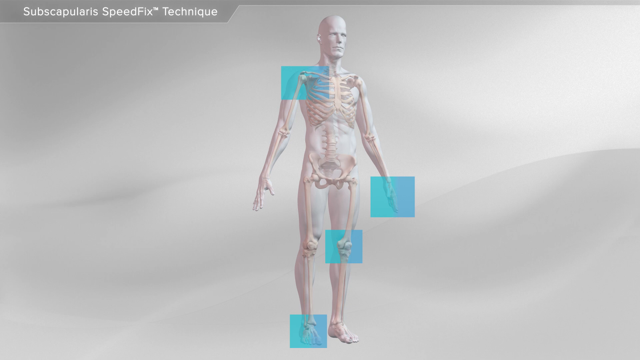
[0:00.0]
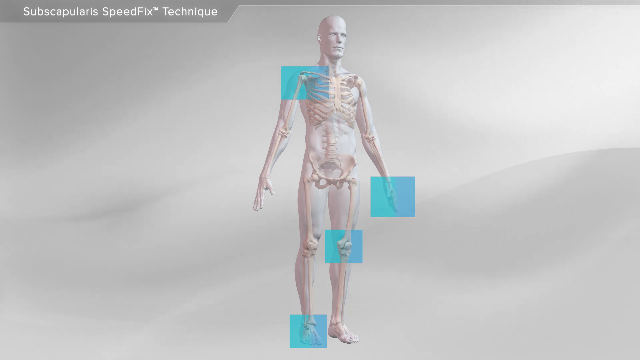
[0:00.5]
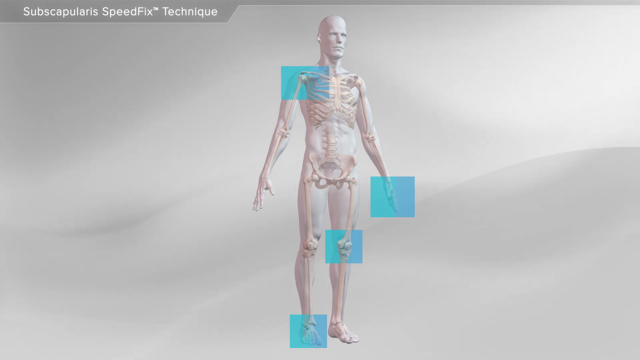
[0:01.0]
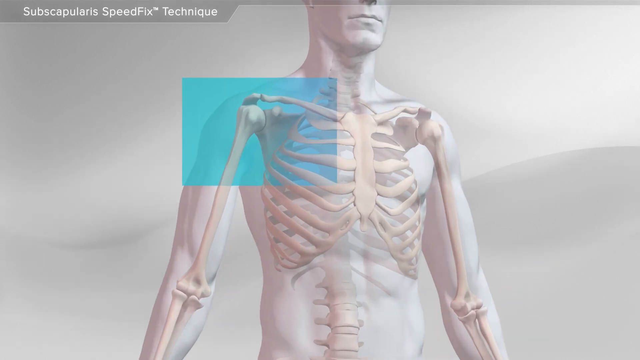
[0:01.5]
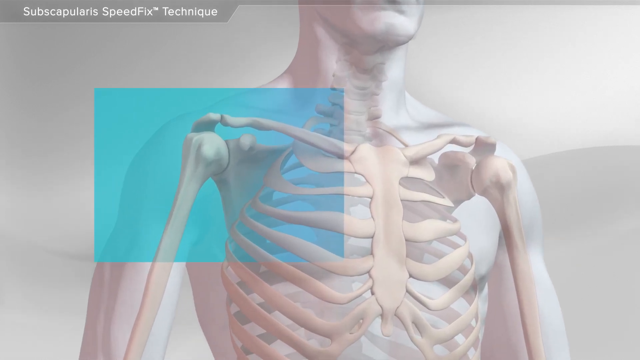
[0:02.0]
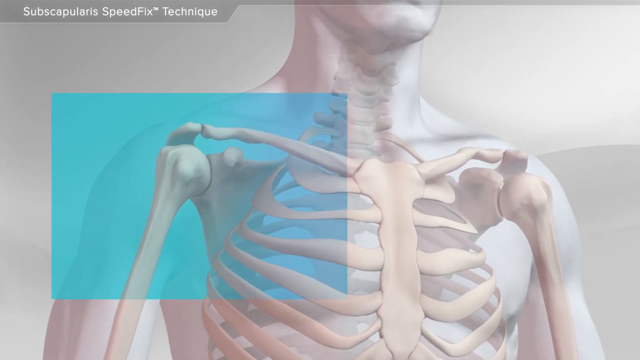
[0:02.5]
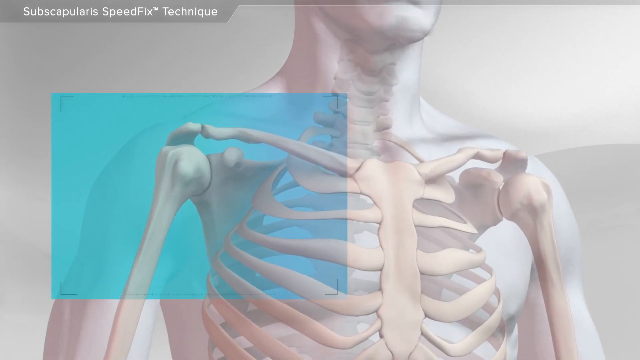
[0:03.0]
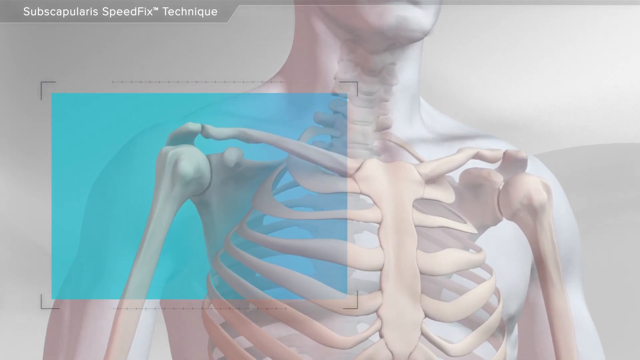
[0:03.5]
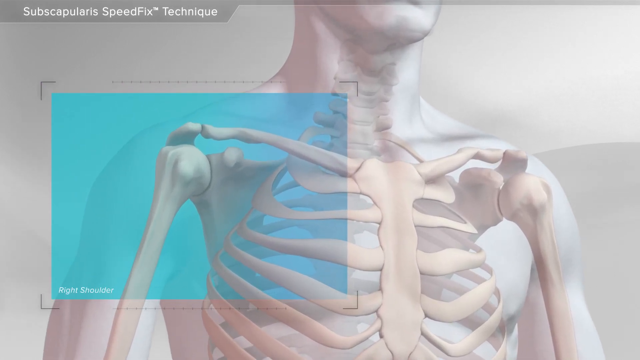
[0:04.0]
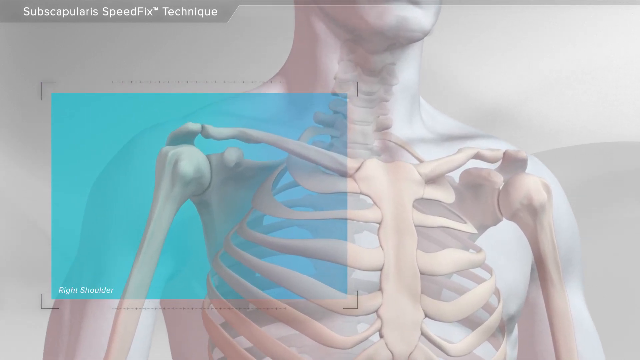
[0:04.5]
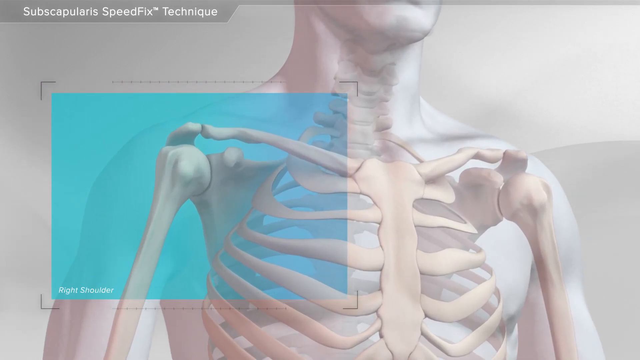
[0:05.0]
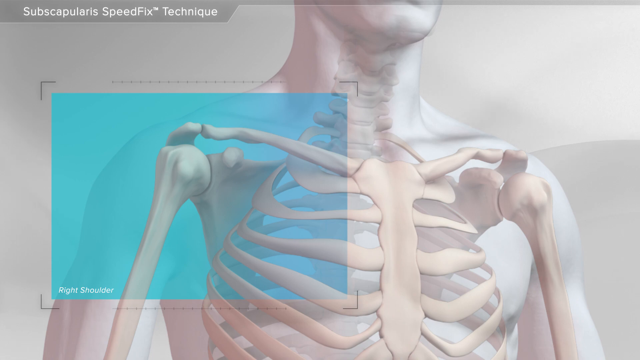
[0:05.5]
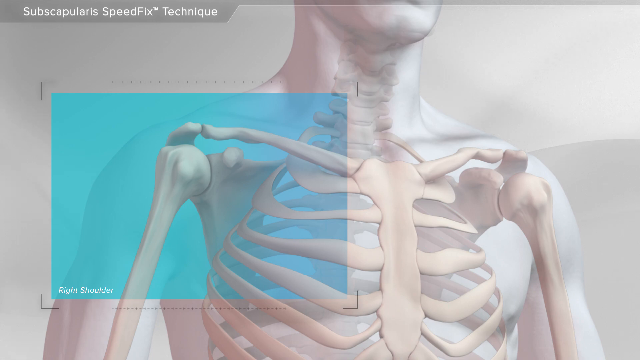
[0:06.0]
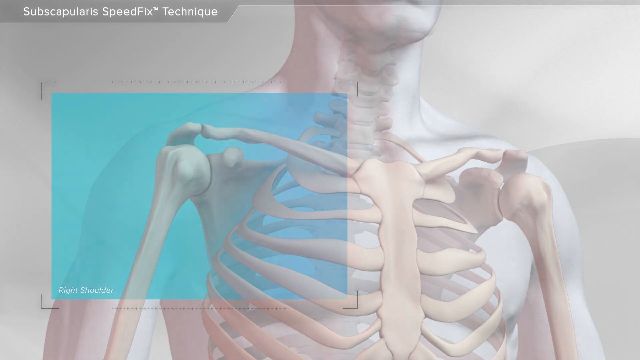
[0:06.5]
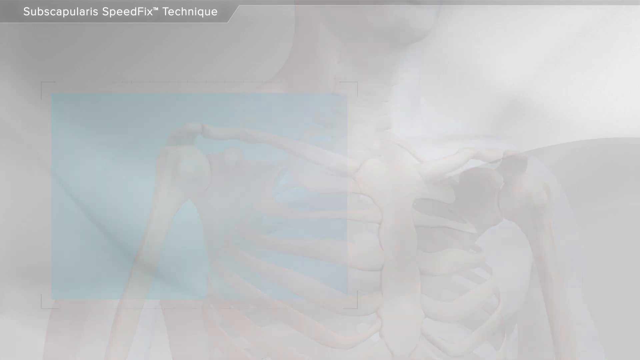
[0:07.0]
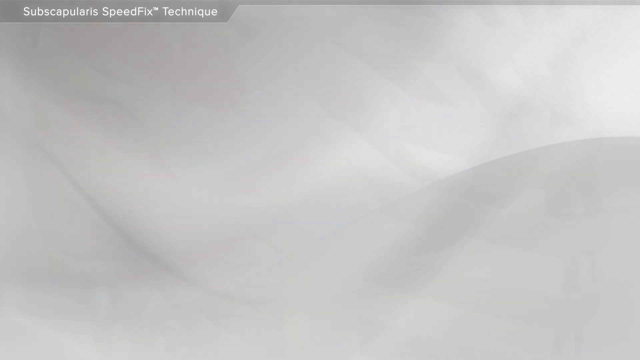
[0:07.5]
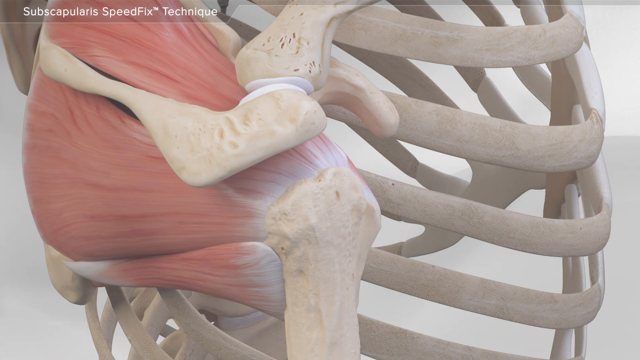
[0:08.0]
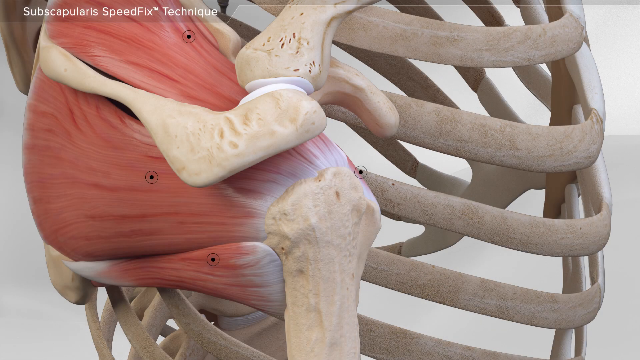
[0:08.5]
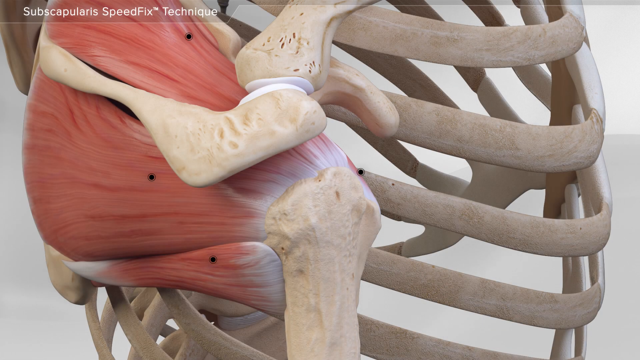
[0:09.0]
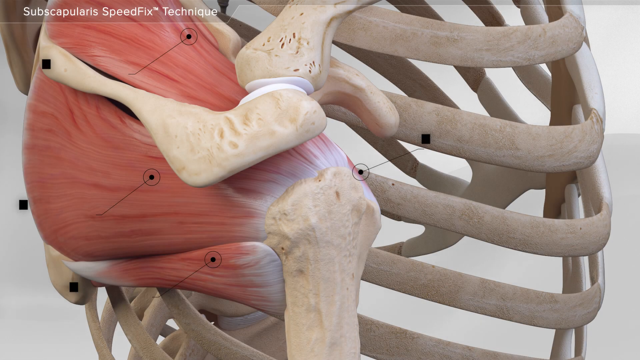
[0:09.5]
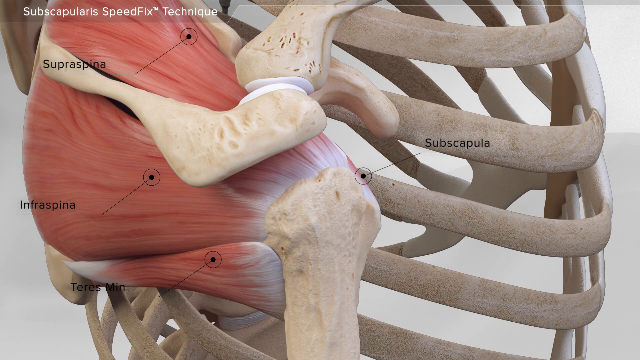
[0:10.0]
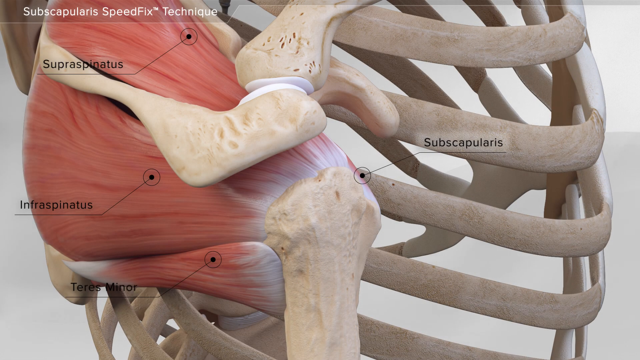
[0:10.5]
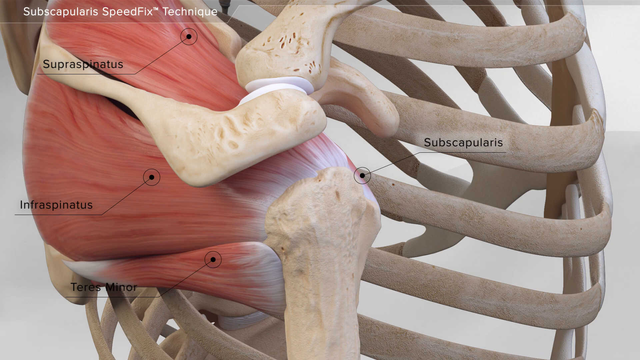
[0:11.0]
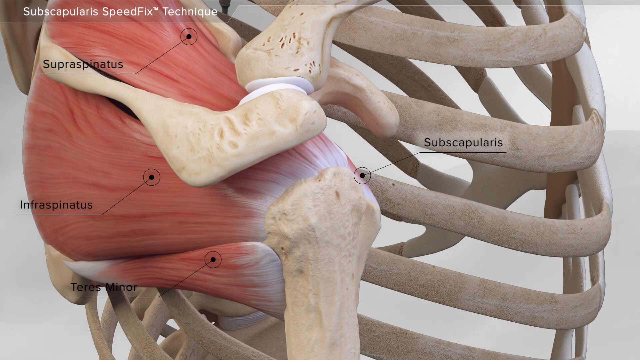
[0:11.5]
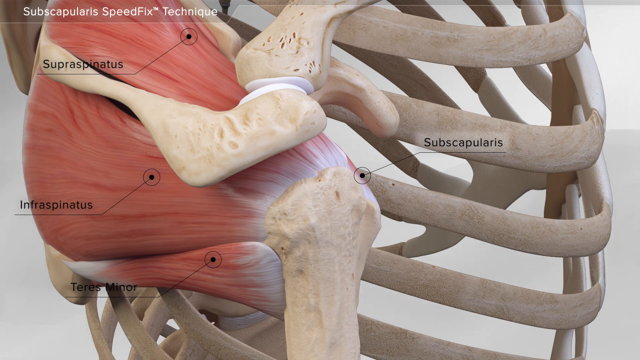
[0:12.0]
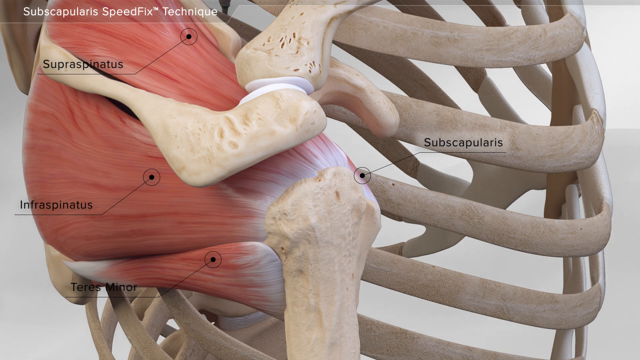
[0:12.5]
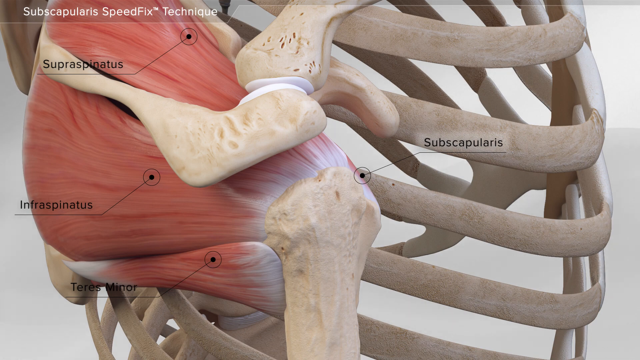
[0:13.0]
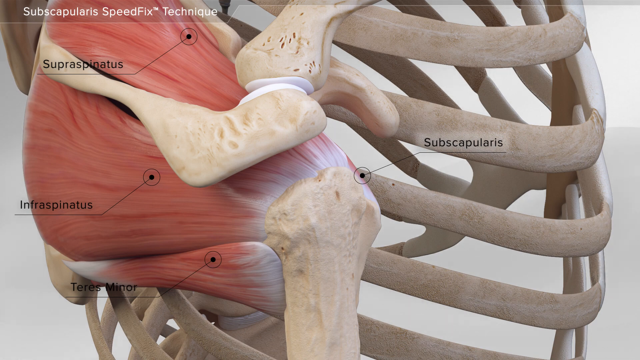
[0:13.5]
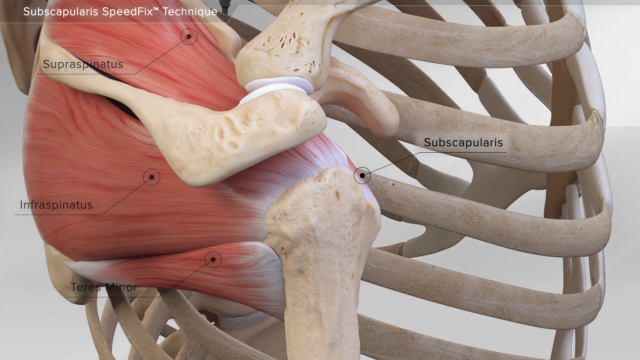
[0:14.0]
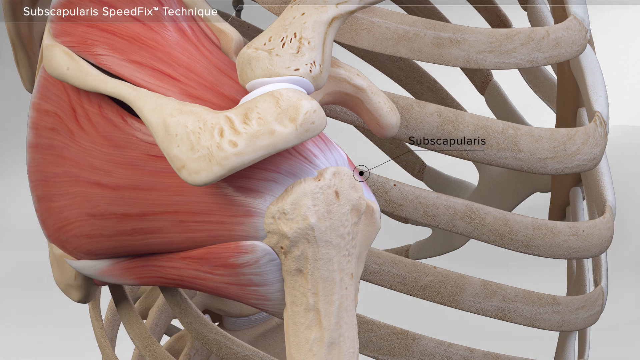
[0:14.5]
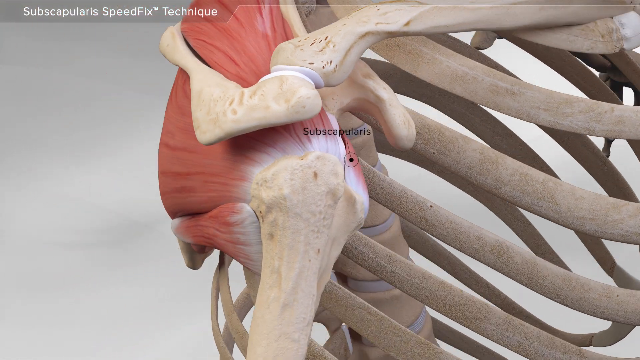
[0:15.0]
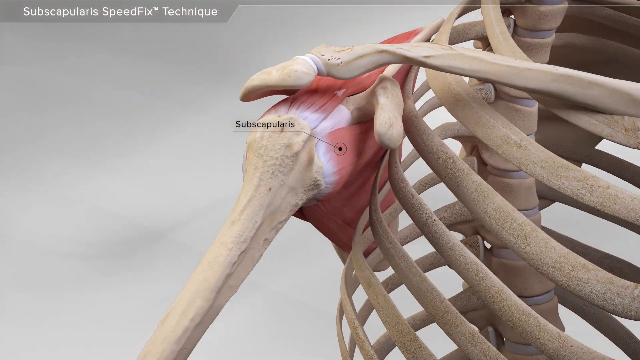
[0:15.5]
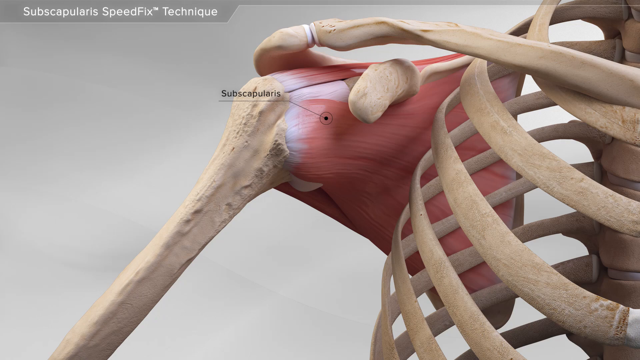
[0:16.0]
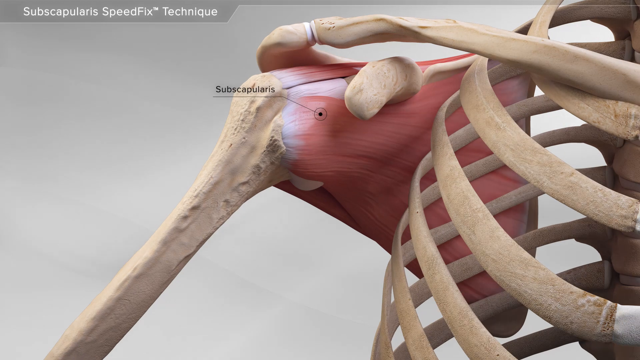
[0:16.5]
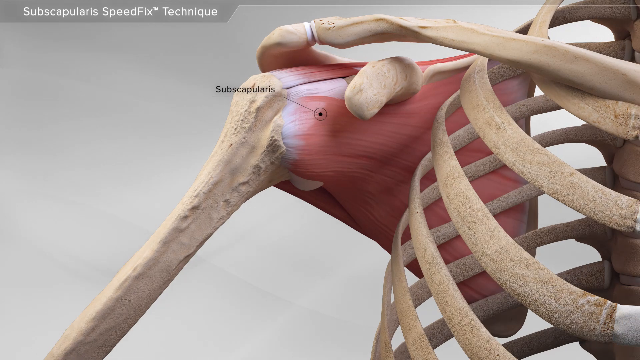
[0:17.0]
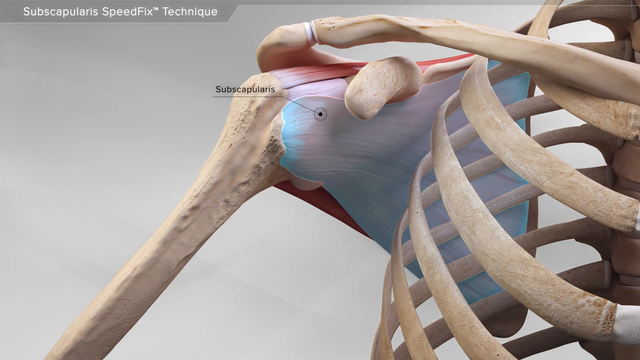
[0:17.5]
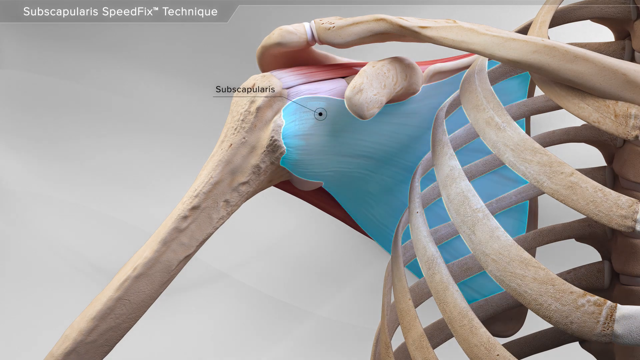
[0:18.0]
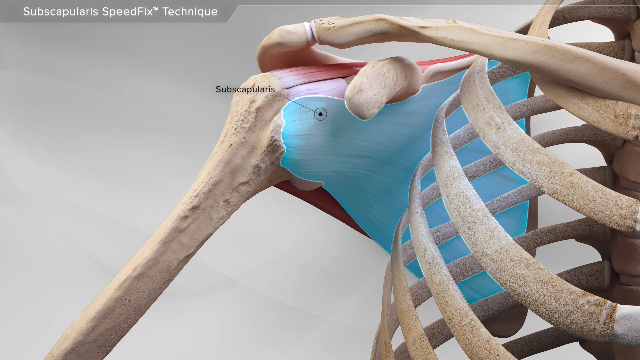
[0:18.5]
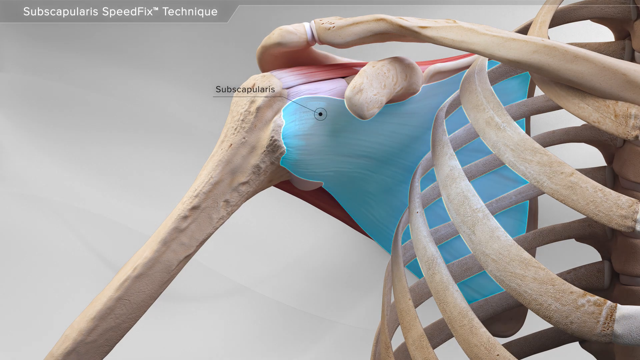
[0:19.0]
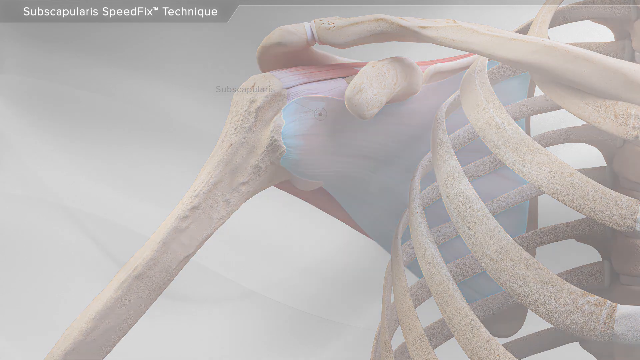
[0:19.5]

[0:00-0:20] Against a gray background, an illustration of a human skeleton, male, faces the camera in the center, with what appears to be an overlay of tissue on top. Translucent blue boxes mark the left shoulder, the right knee and the right hand. In the upper left corner, small white lettering reads "subscapularis speed fix technique". The view then moves to a close-up of the shoulder and scapula, labeled as the right shoulder, followed by an up-close illustration of the interior showing the muscles, labeled in black: "scapularis", "infraspinatus", "teres minor" and "supraspinatus". The view rotates to show an interior view of the subscapularis, which is then shaded blue. The view then returns to the whole skeleton, showing the entire human body again with the blue squares.